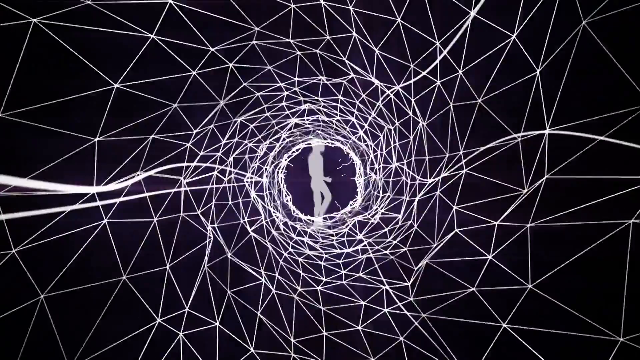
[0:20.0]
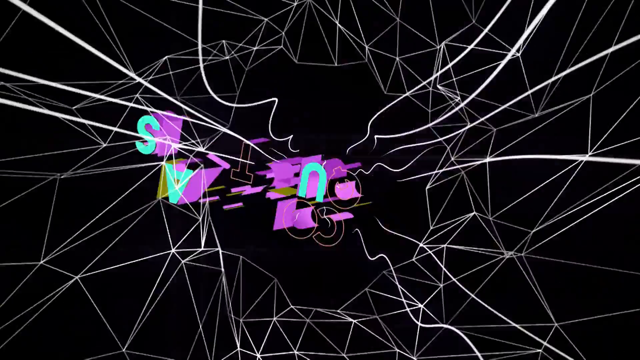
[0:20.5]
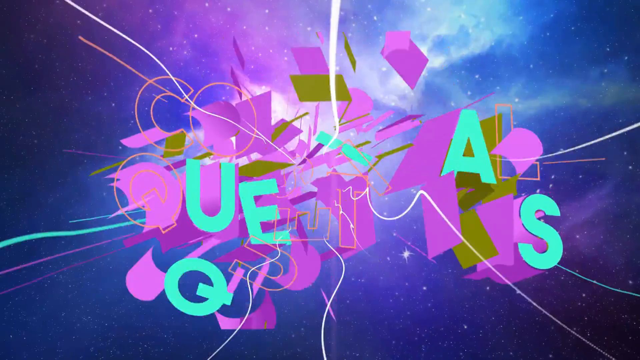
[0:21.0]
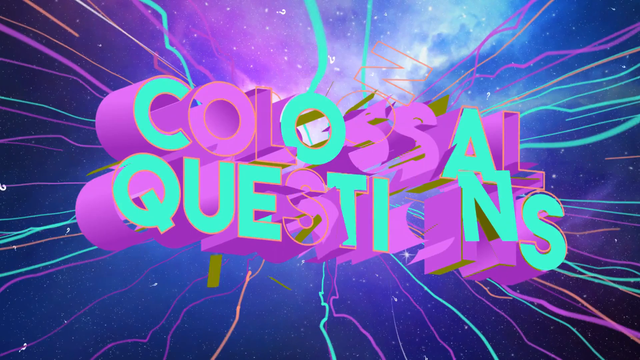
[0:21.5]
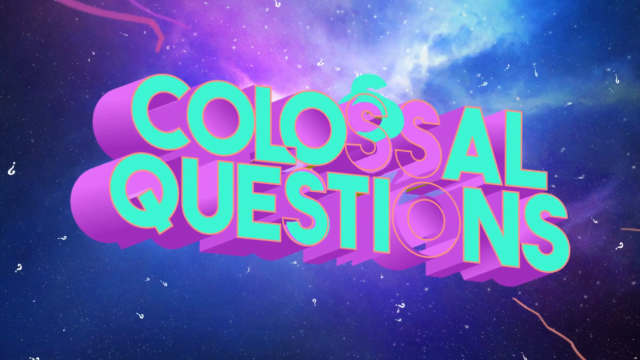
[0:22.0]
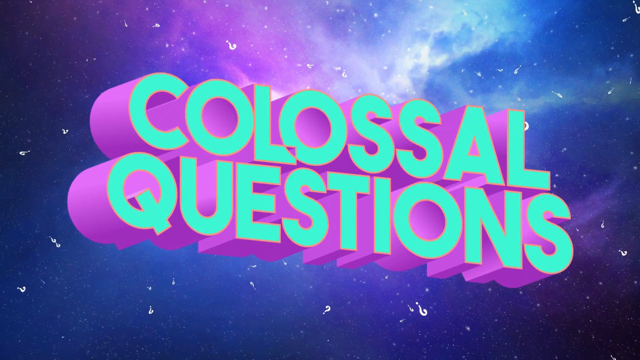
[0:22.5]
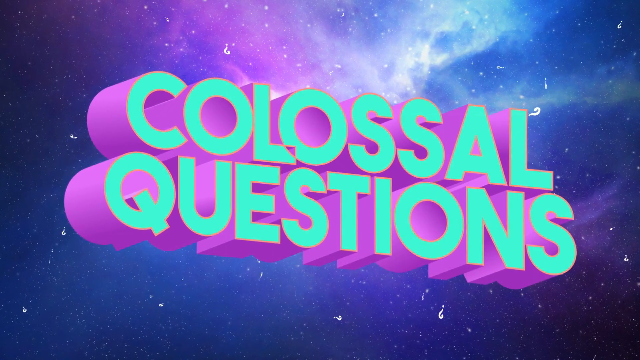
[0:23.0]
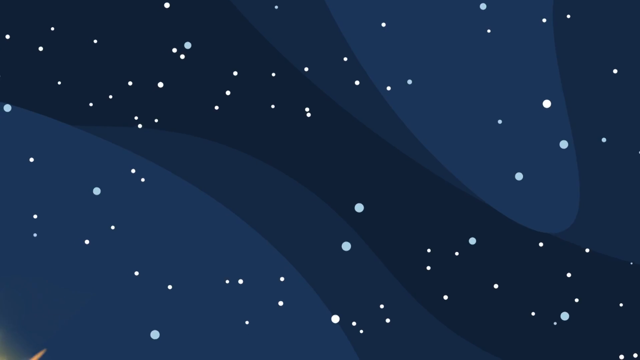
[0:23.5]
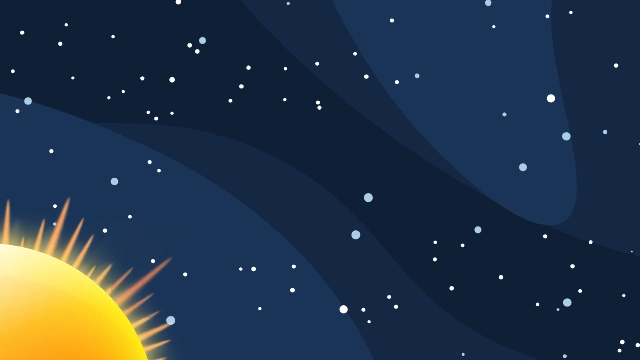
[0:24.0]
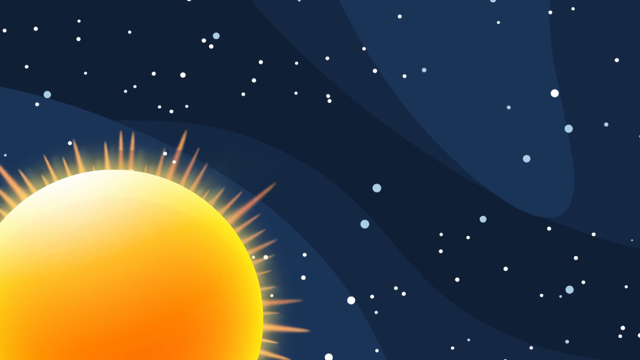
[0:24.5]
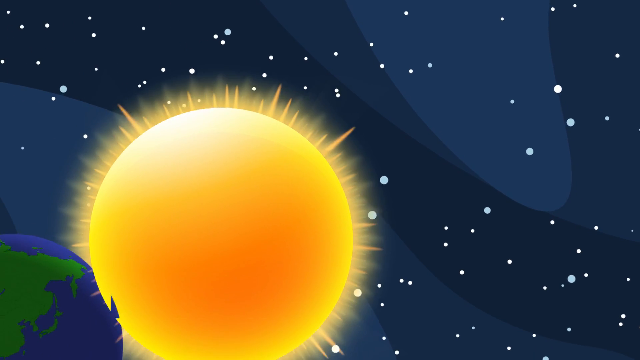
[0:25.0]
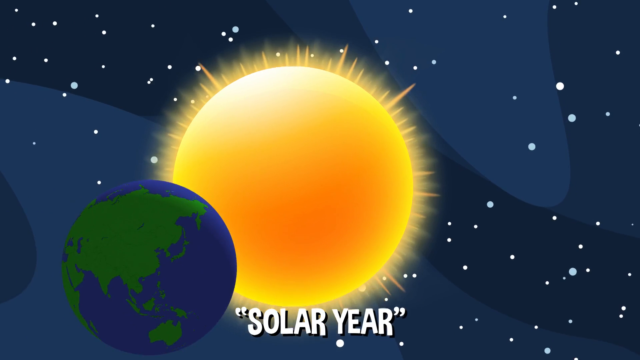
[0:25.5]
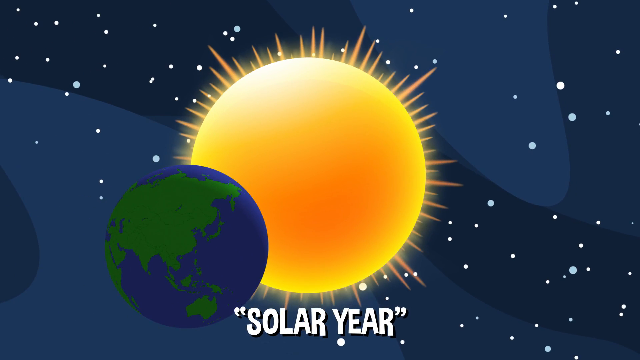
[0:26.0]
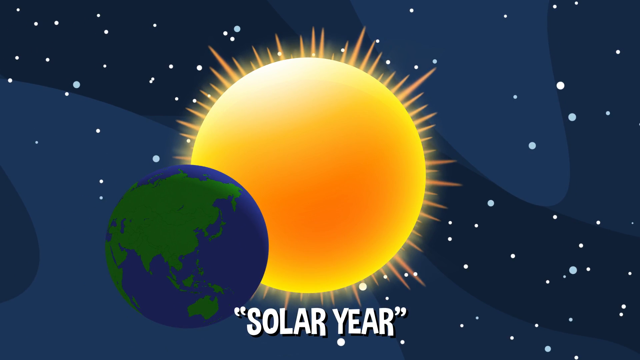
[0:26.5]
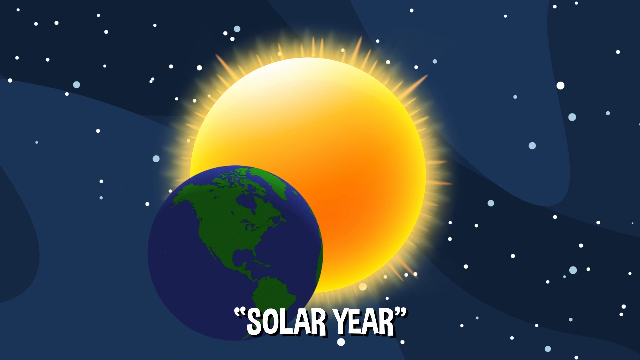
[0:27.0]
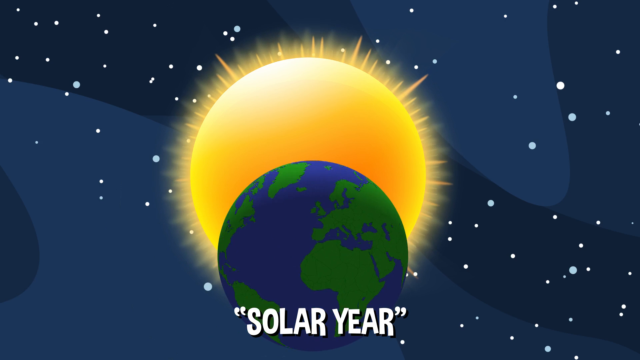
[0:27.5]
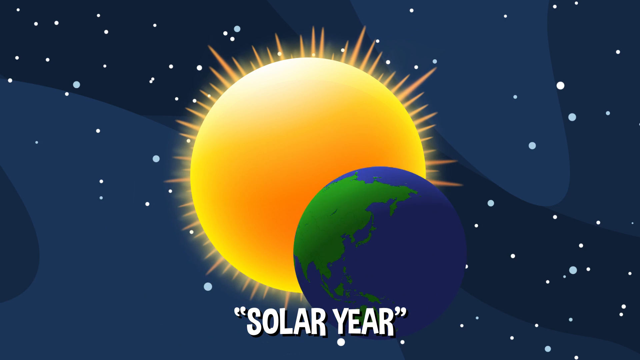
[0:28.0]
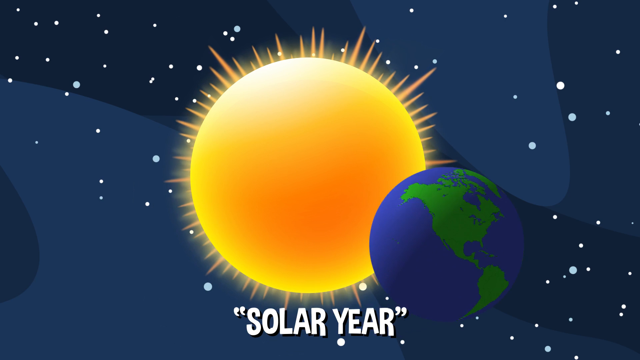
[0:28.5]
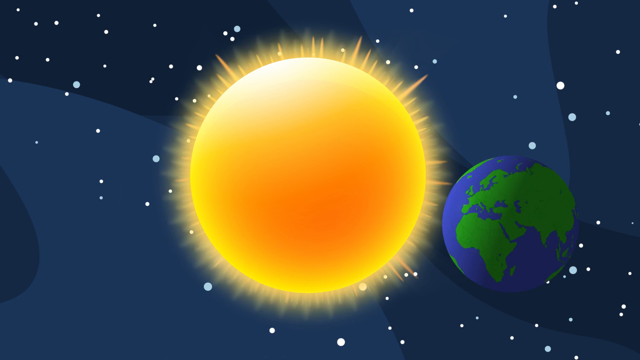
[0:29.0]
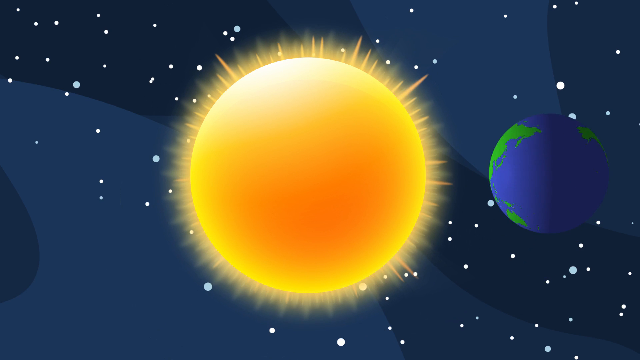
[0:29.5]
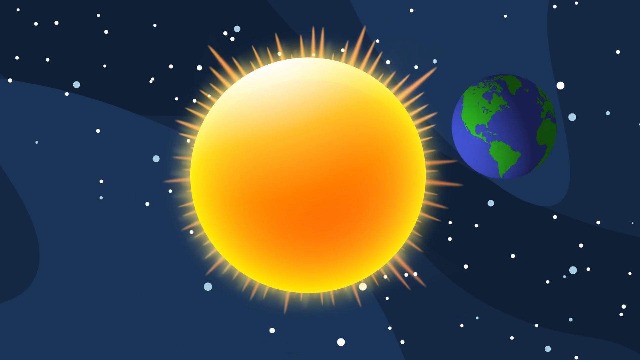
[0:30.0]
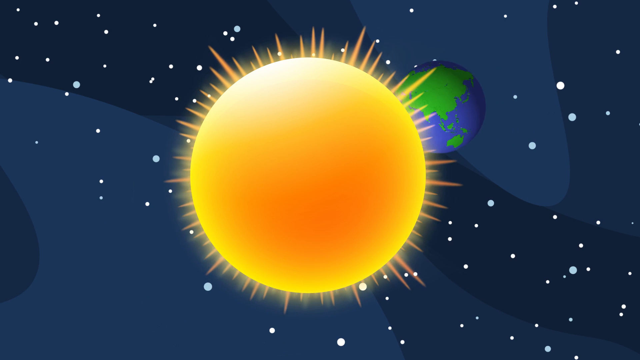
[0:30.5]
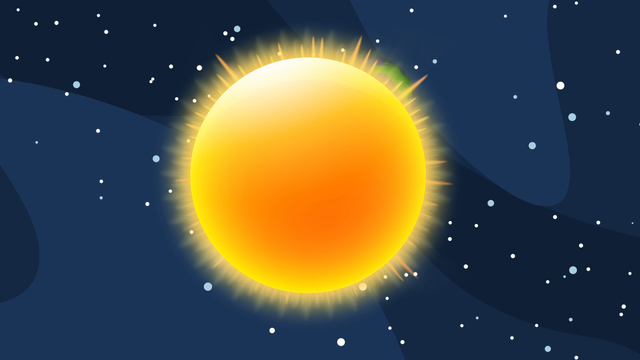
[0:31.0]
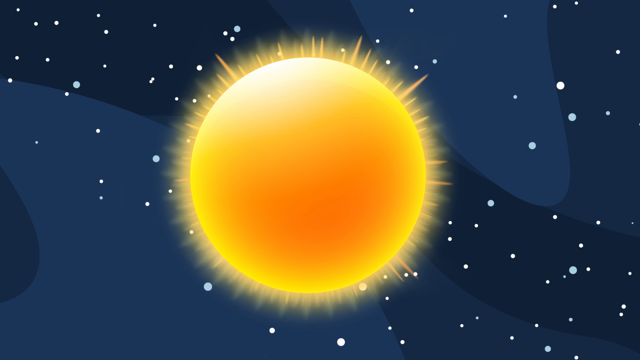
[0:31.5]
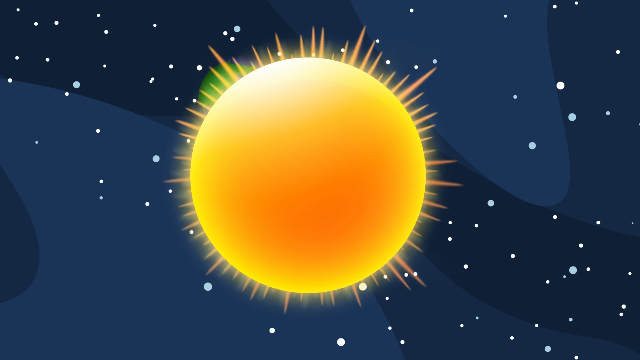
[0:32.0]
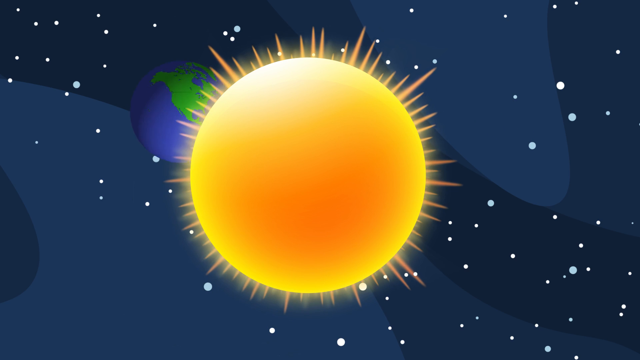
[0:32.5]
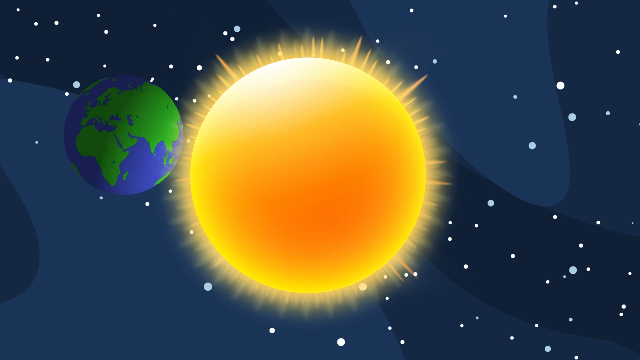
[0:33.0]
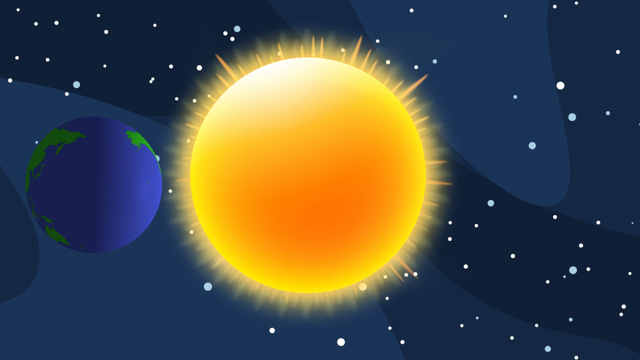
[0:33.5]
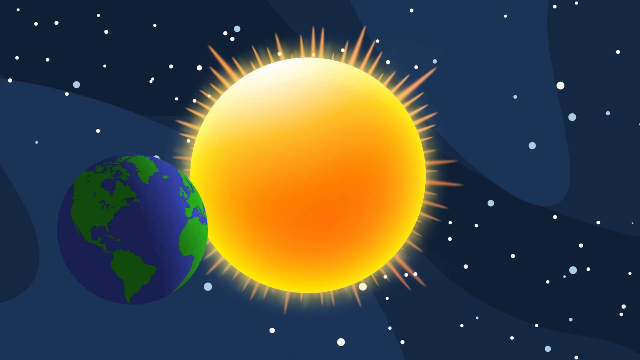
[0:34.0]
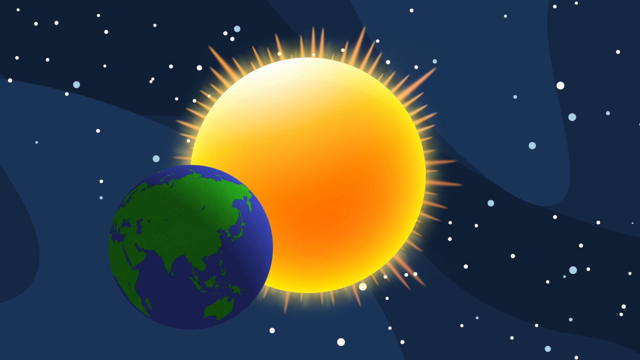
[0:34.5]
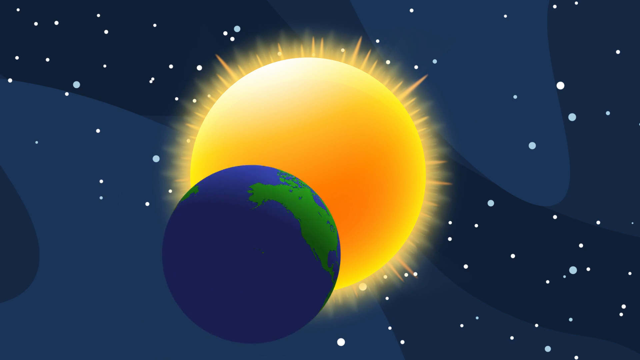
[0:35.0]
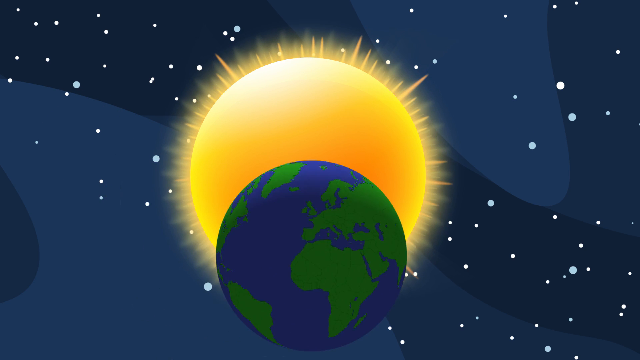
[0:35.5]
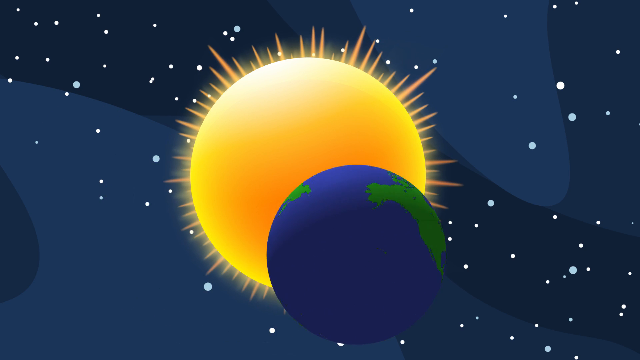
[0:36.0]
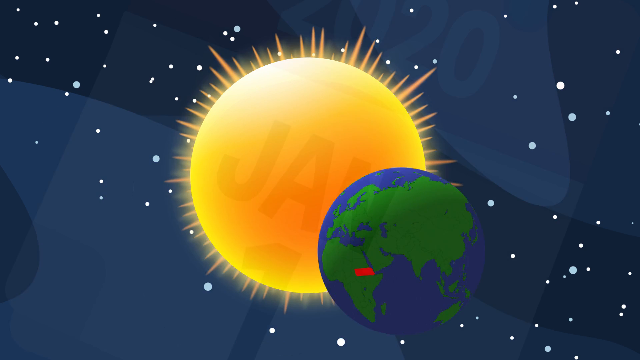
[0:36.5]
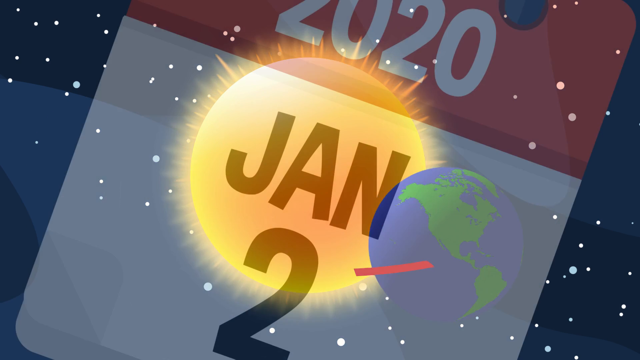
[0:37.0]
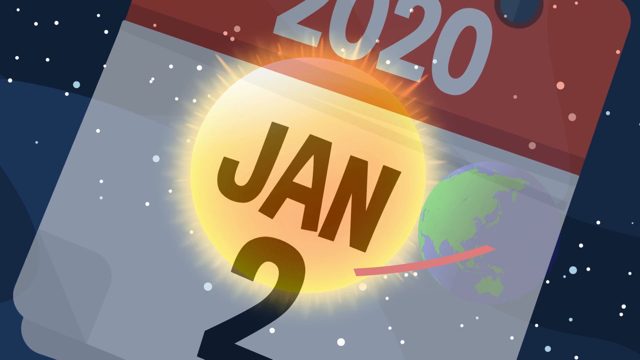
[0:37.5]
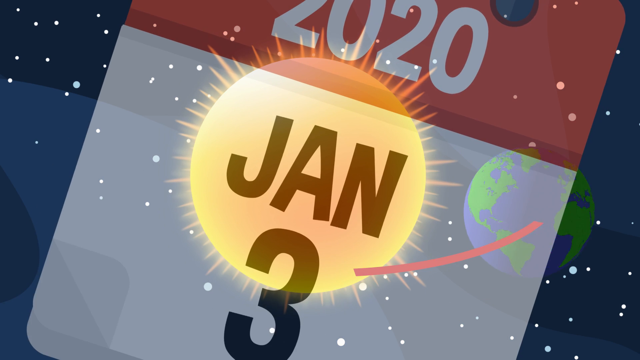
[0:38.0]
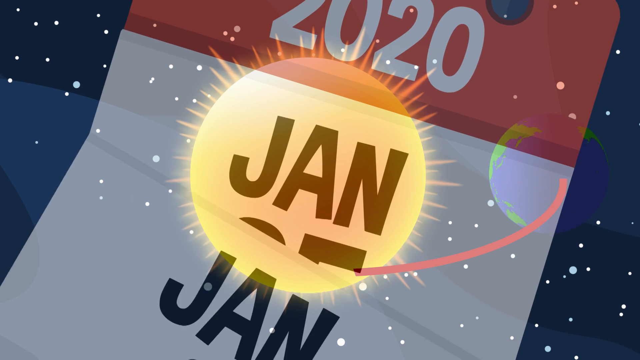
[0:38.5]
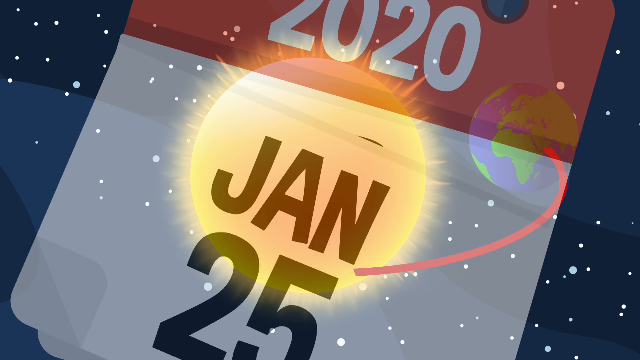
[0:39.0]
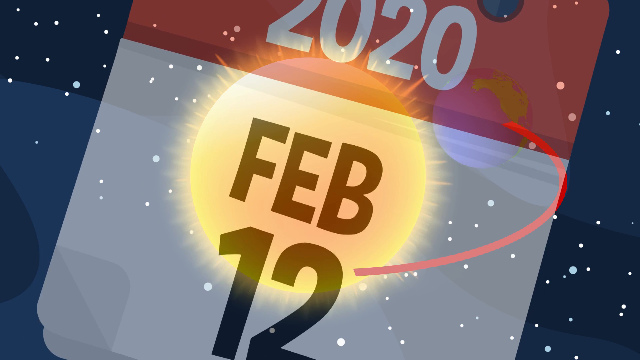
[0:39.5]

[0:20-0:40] The intro animation shows the evolution of man, passing through white fractals. An explosion of colors appears along with the text "Colossal Questions" in 3D with various bluish colors. The scene then shifts to space: the sun is visible with the text "solar year" below it, and planet Earth, to its left, begins to rotate and move around the sun. As Earth is about to complete a lap, a transition shows a calendar passing through the days, overlaid and slightly transparent.